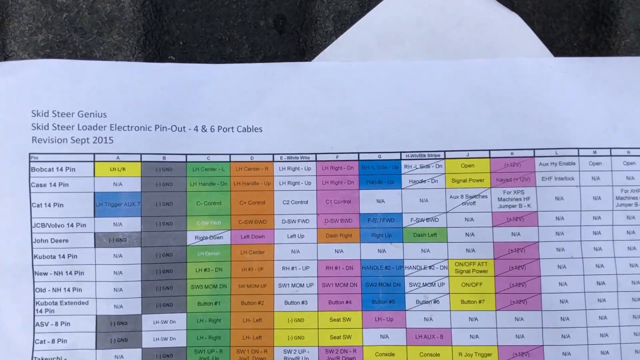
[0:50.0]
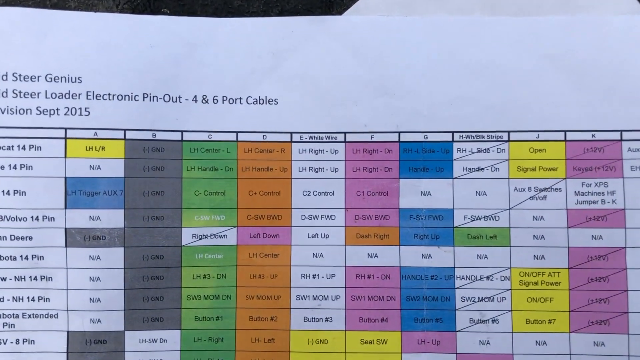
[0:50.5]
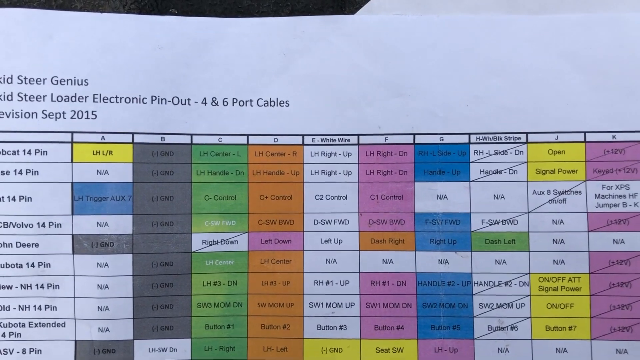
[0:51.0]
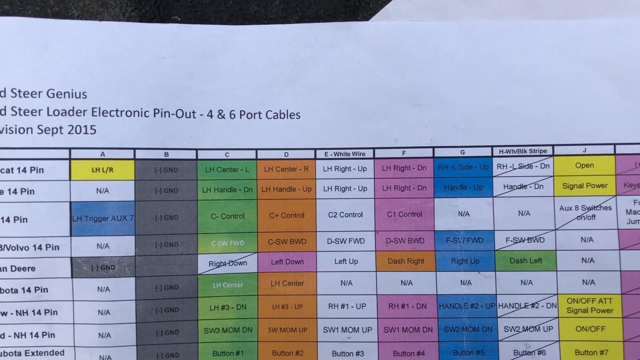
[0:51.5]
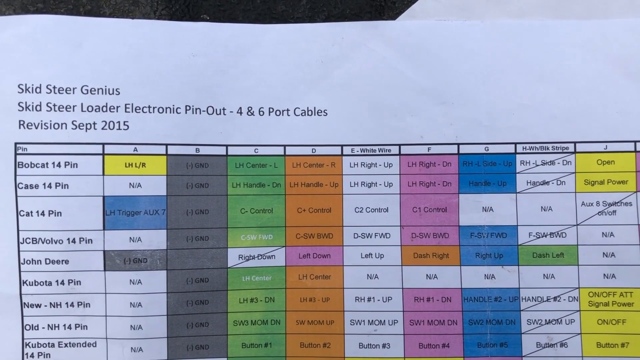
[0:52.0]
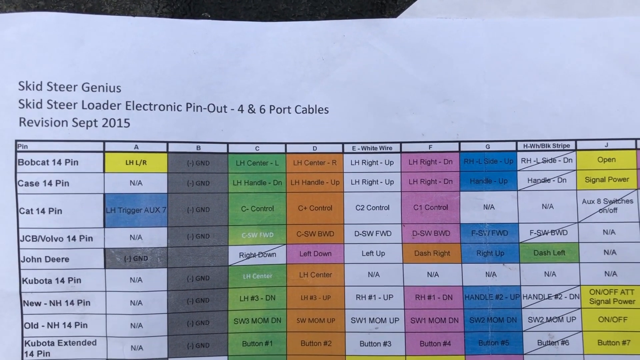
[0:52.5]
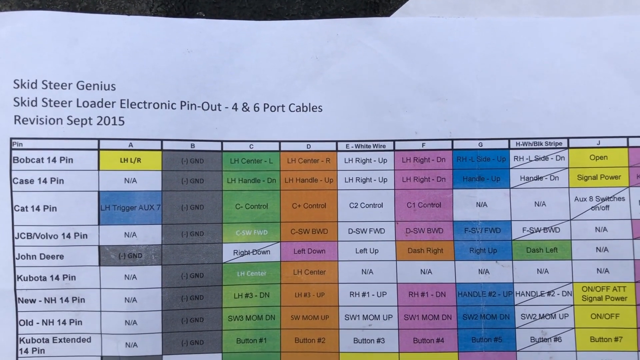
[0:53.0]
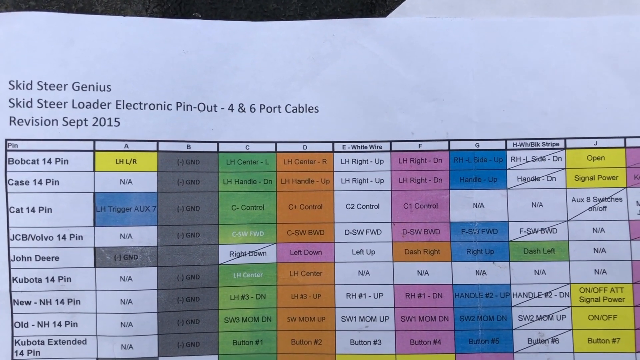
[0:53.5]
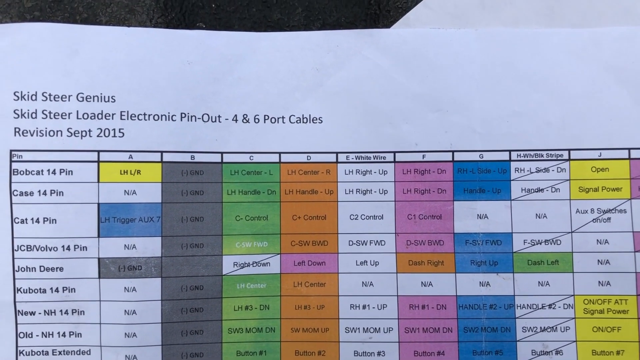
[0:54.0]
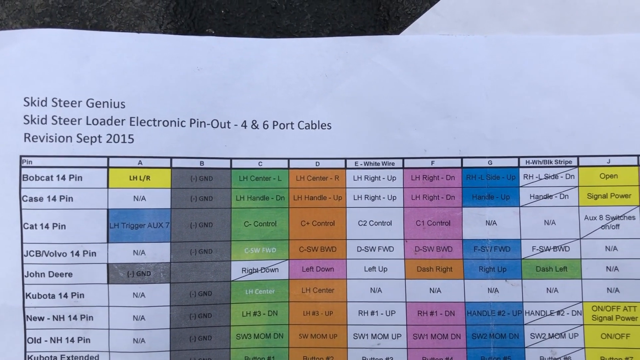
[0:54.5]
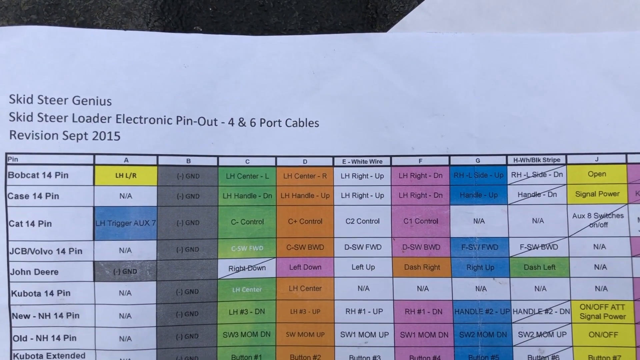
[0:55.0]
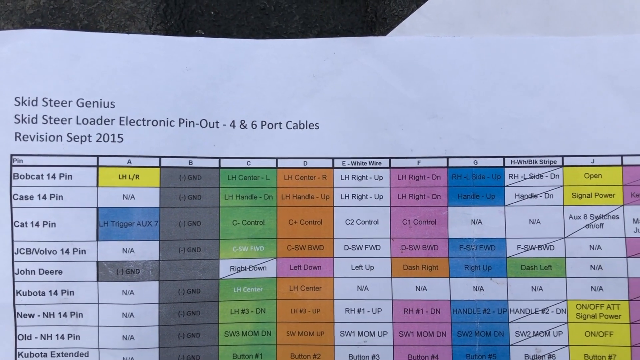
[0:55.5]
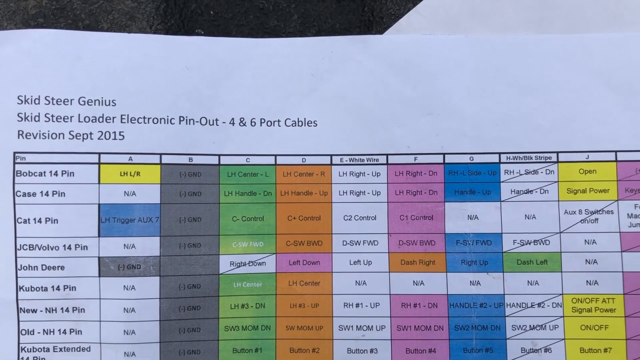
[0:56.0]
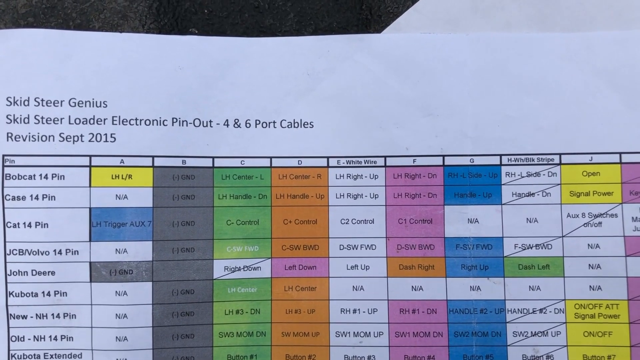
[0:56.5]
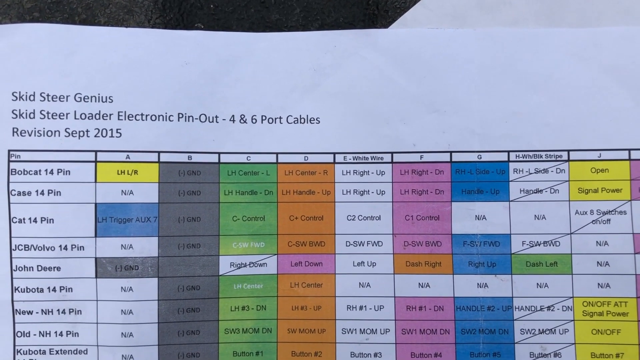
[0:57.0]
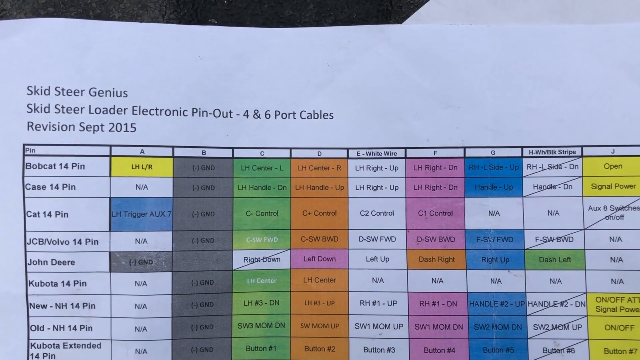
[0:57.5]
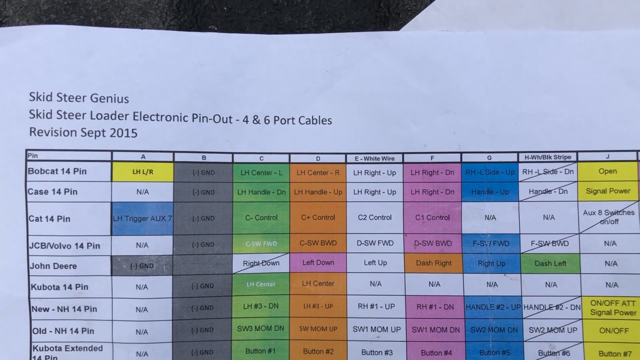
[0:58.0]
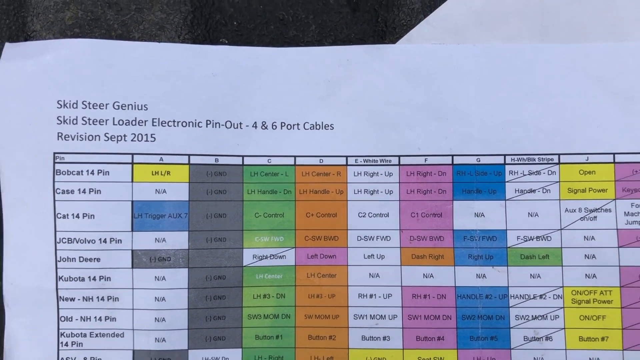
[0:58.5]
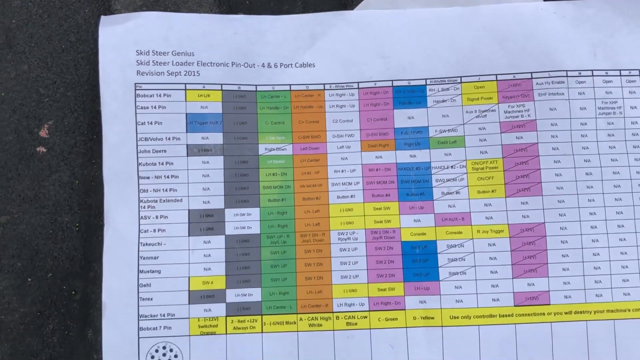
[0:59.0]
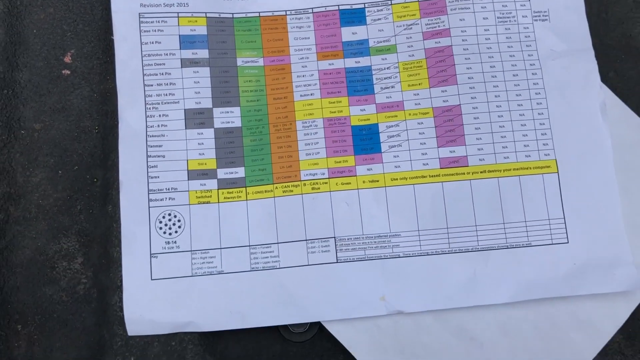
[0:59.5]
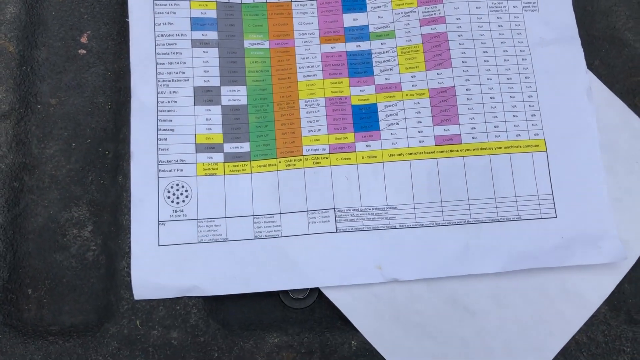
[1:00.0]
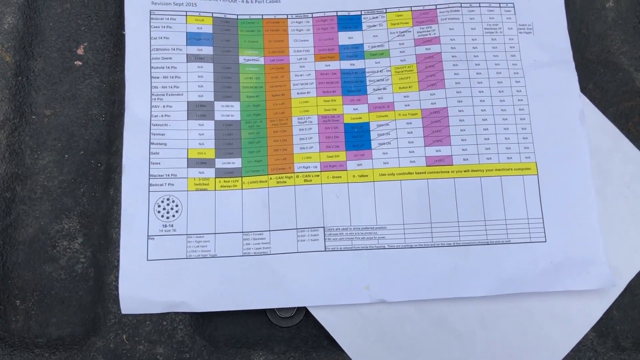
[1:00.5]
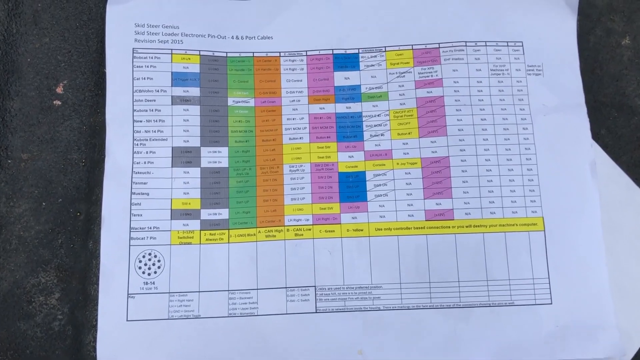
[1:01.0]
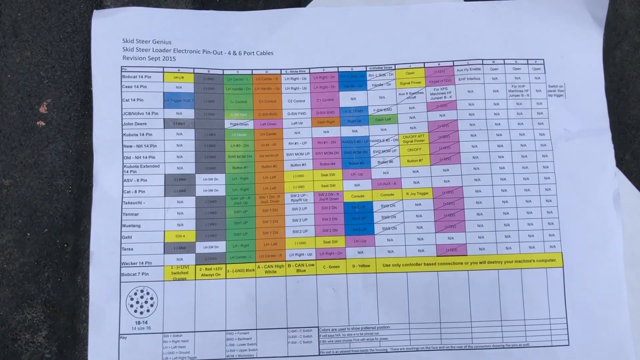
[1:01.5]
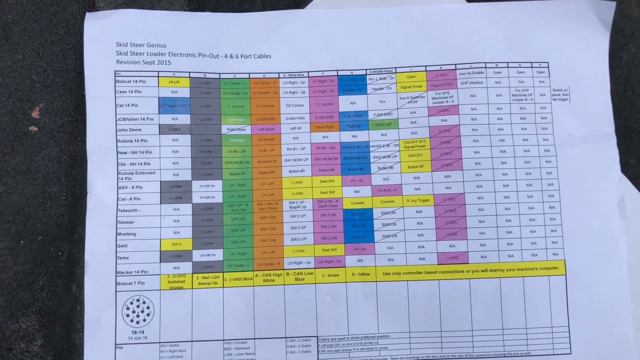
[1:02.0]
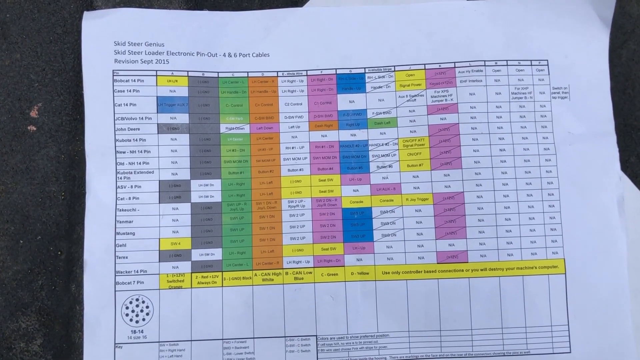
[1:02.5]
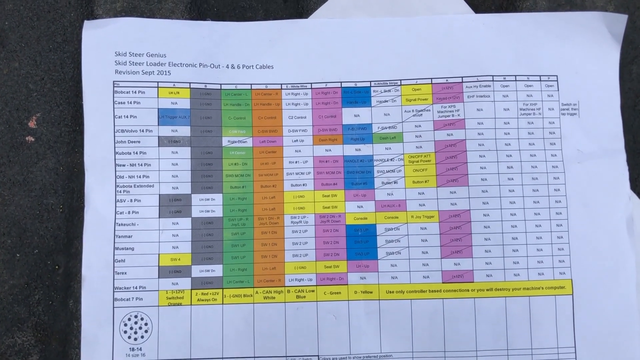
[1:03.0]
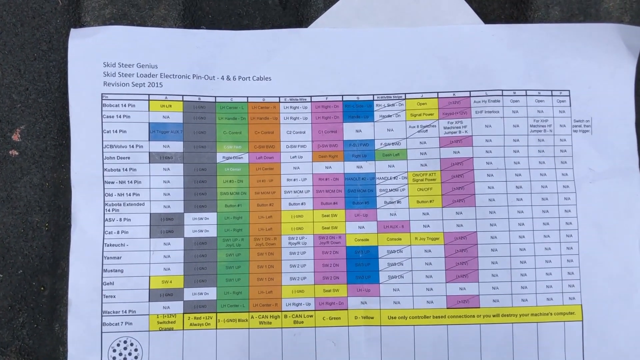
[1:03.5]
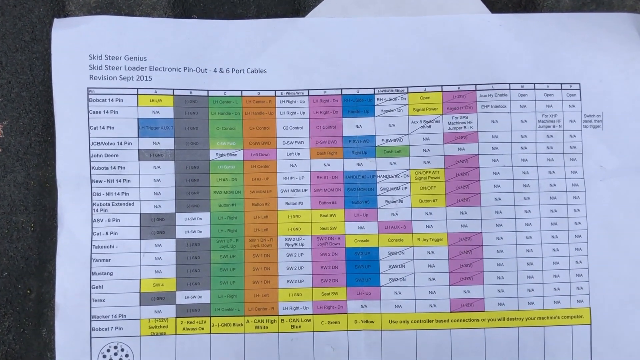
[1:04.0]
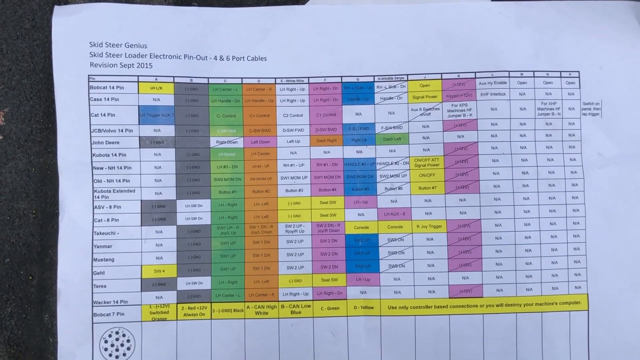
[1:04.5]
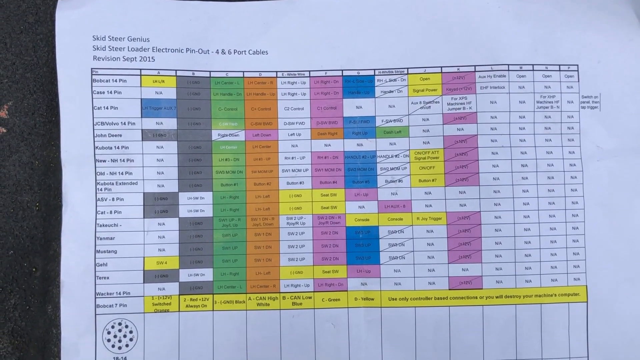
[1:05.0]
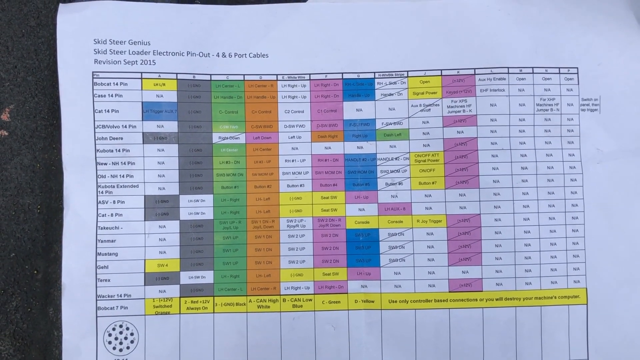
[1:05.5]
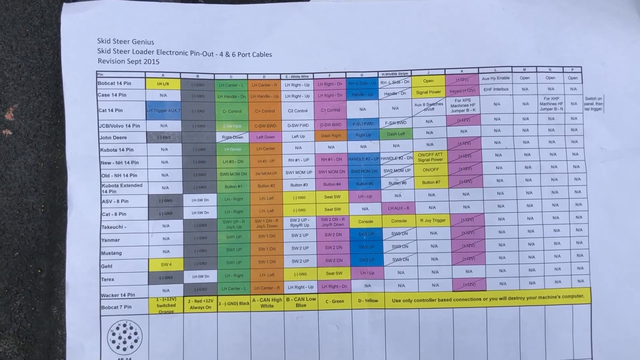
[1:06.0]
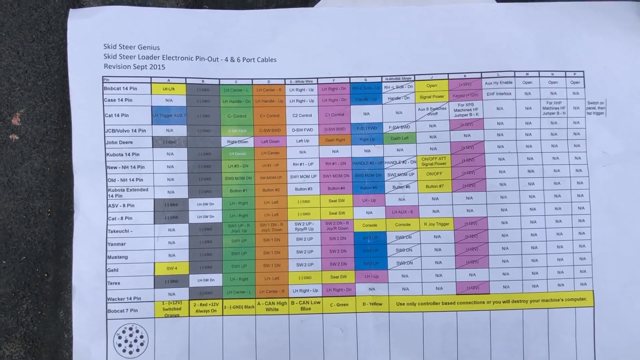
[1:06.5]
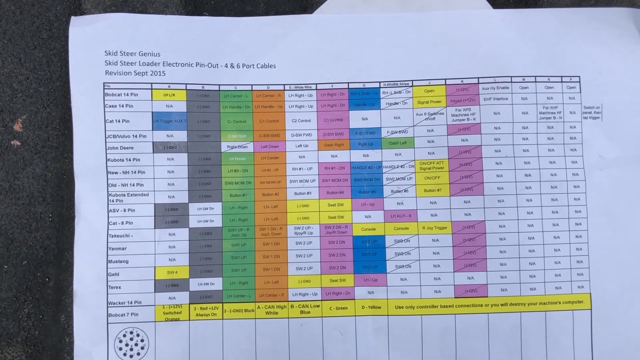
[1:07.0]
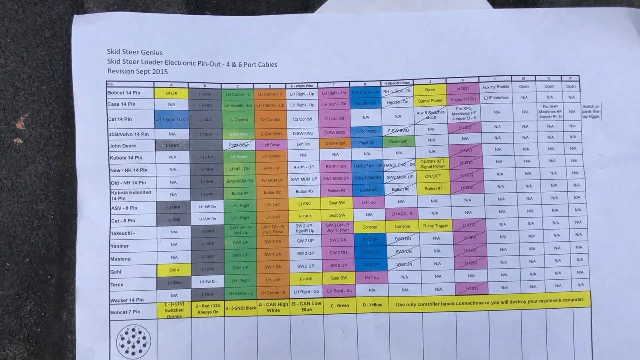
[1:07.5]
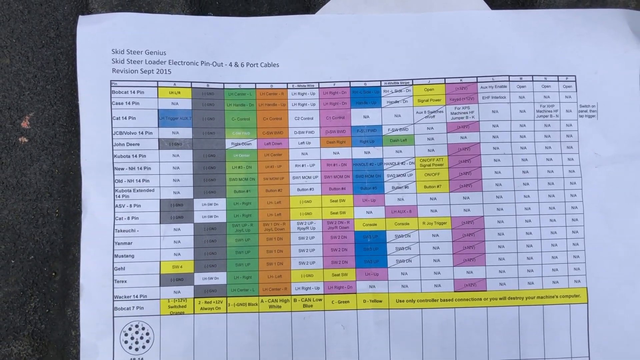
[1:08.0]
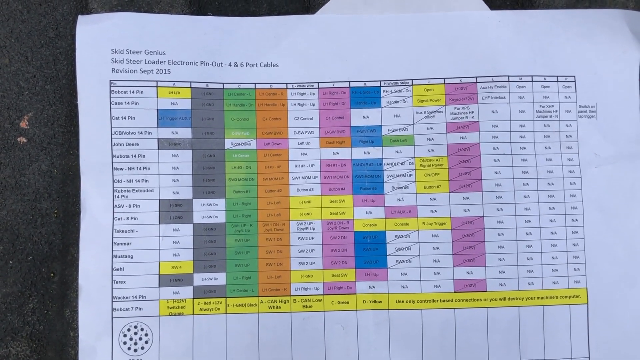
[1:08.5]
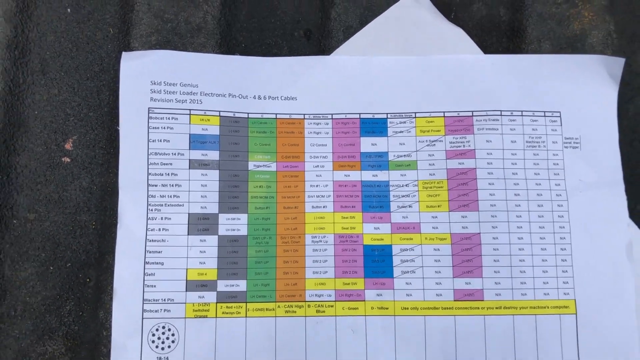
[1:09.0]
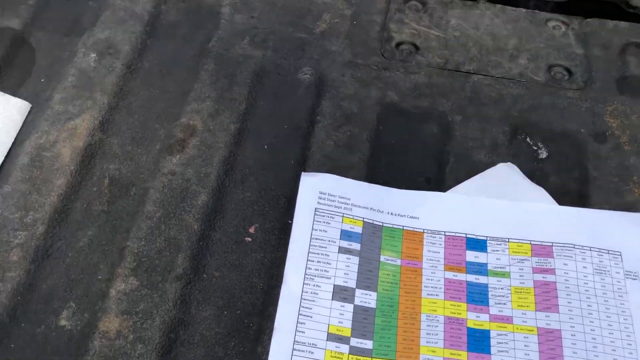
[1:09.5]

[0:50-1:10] A zoomed-in view of the report shows different statements, including "skid-steer loader electronic pin, pin-out, four and six port cables" and a revision date of "September 2015". Entries read "Bobcat 14 pin", "K614 pin", "Cat 14 pin" and "JCB Volvo 14 pin", with columns lettered A, B, C and D. Some entries are marked not applicable: column A shows K614 pin and JCB Volvo 14 pin as not applicable, while Bobcat 14 pin is listed as "LNL/RL".